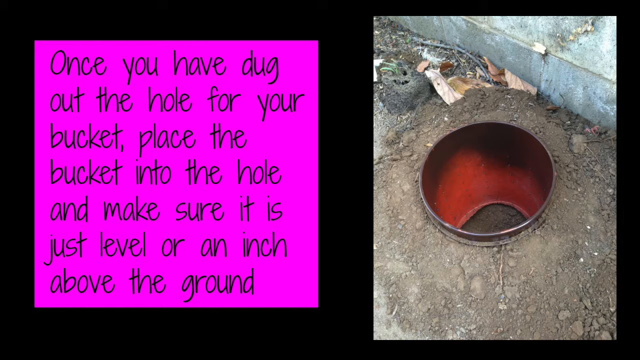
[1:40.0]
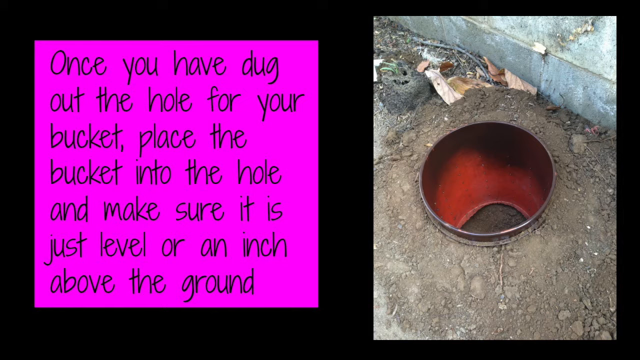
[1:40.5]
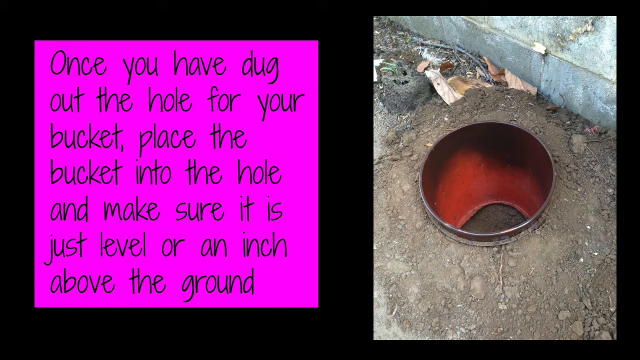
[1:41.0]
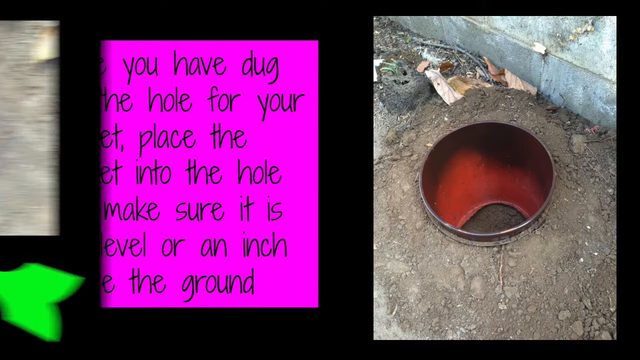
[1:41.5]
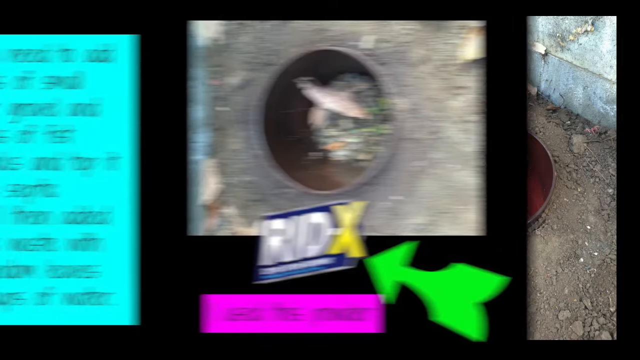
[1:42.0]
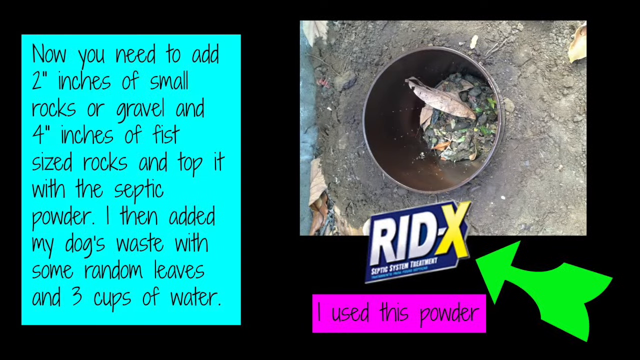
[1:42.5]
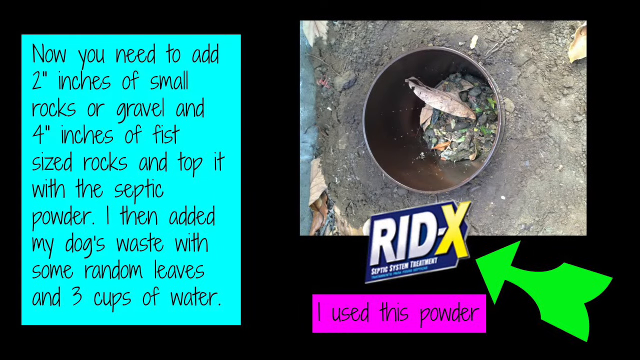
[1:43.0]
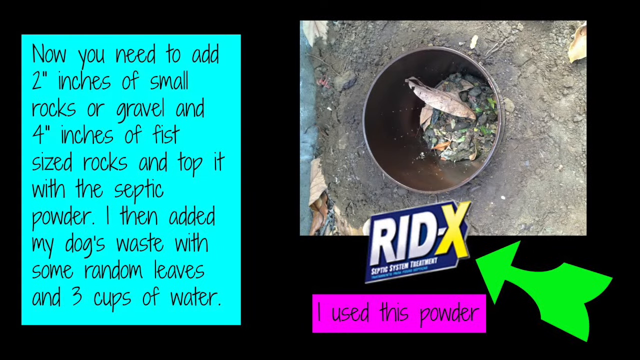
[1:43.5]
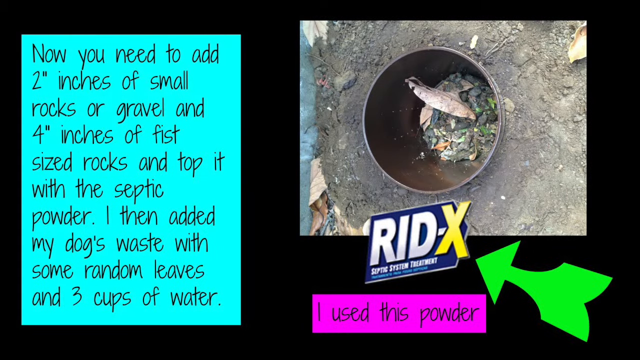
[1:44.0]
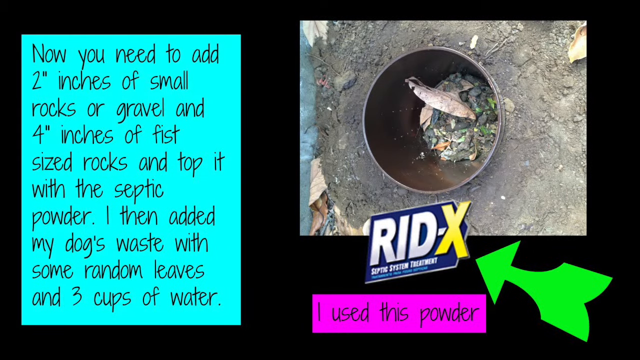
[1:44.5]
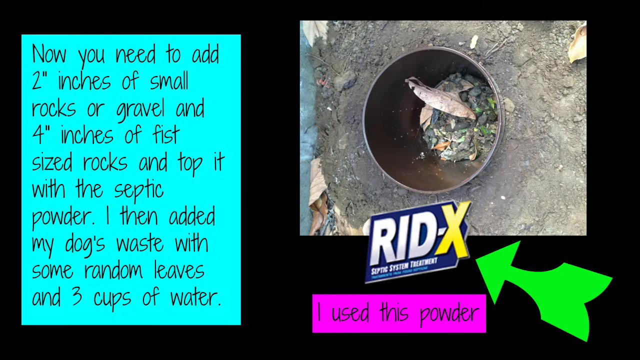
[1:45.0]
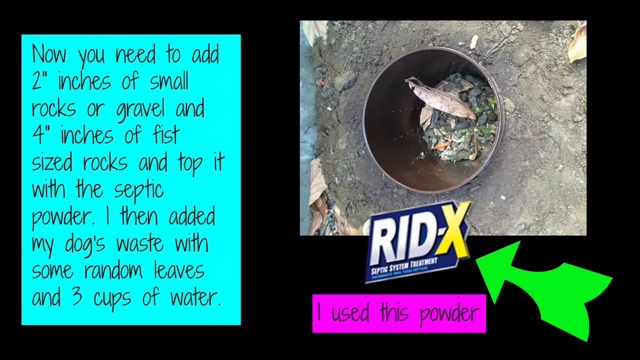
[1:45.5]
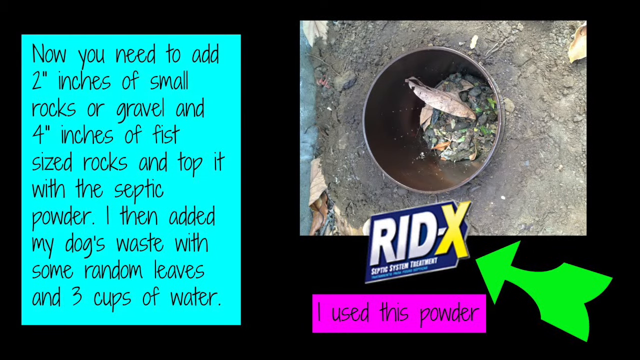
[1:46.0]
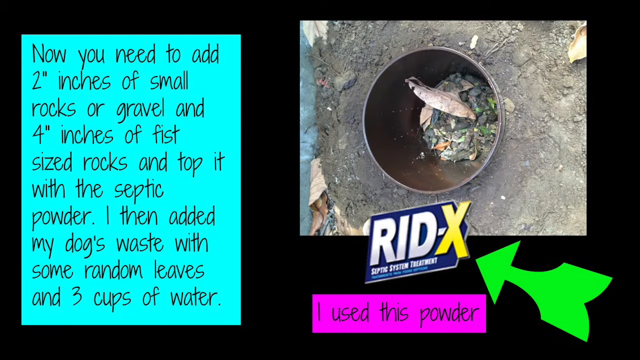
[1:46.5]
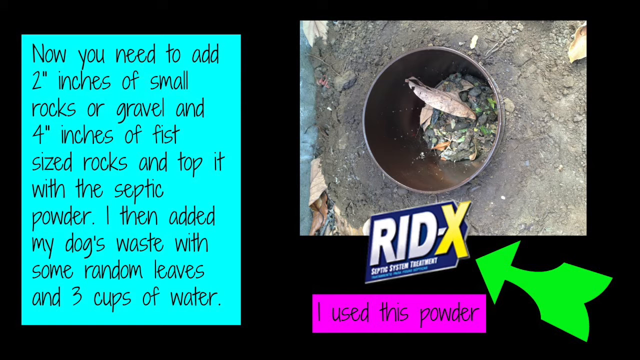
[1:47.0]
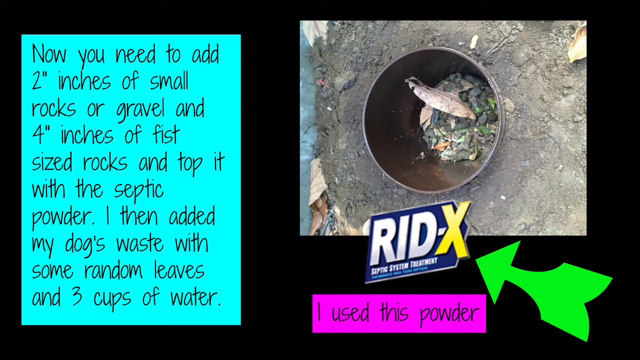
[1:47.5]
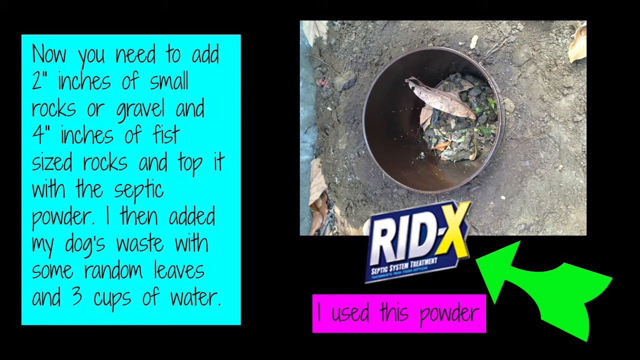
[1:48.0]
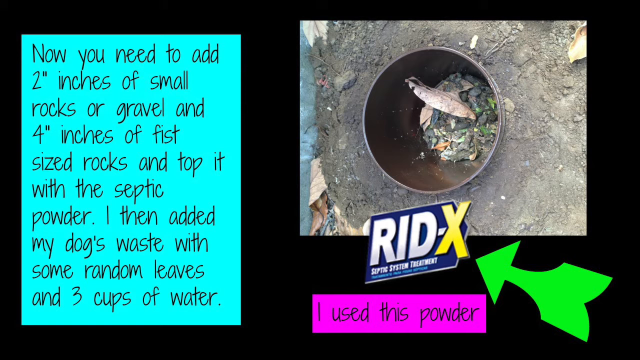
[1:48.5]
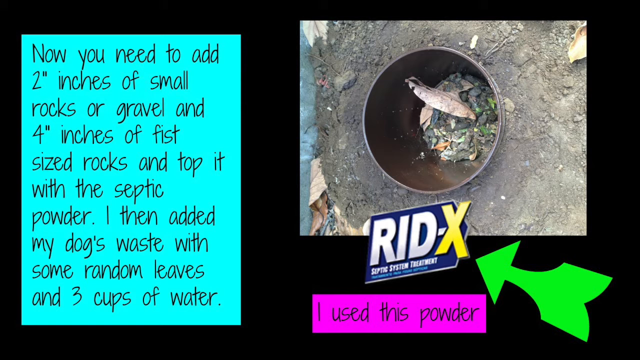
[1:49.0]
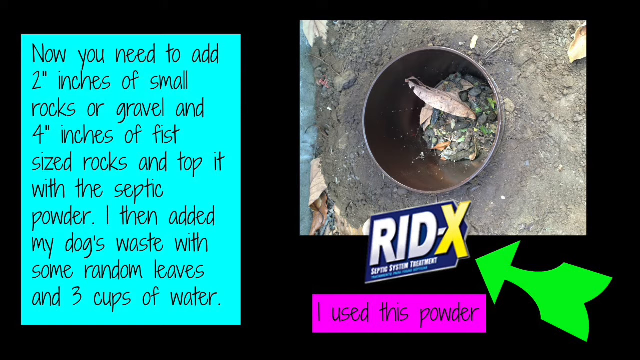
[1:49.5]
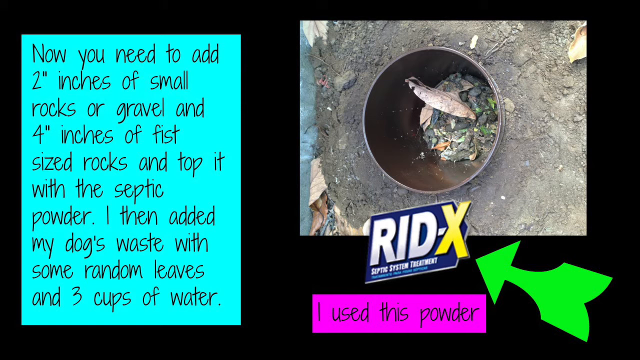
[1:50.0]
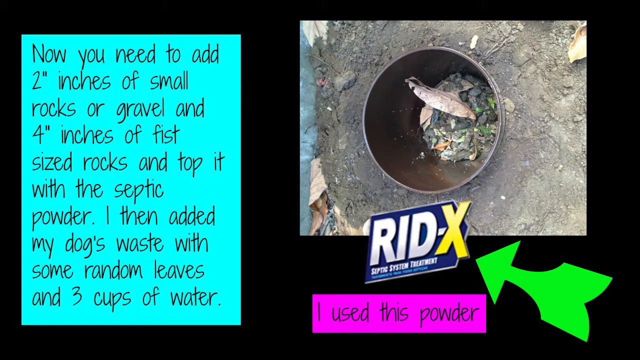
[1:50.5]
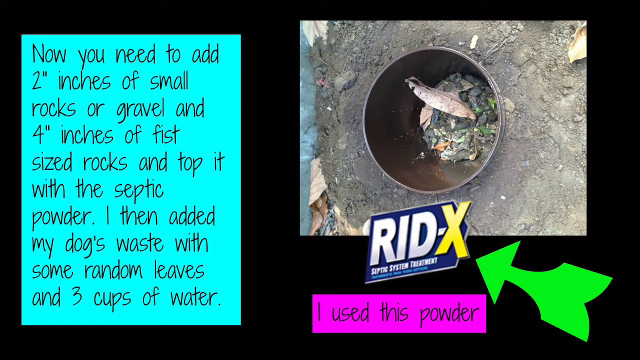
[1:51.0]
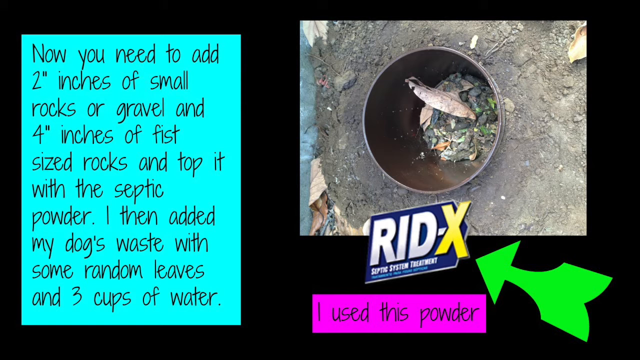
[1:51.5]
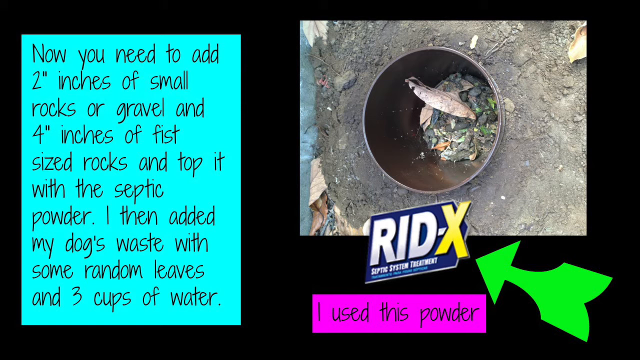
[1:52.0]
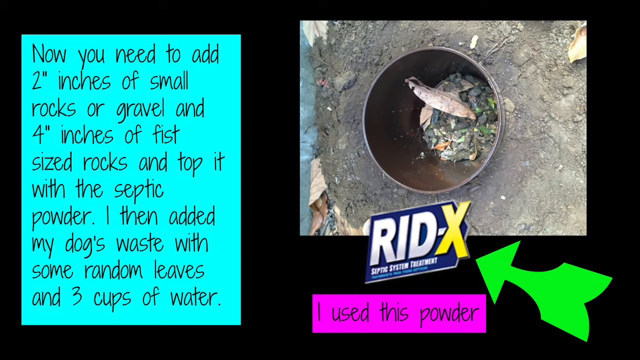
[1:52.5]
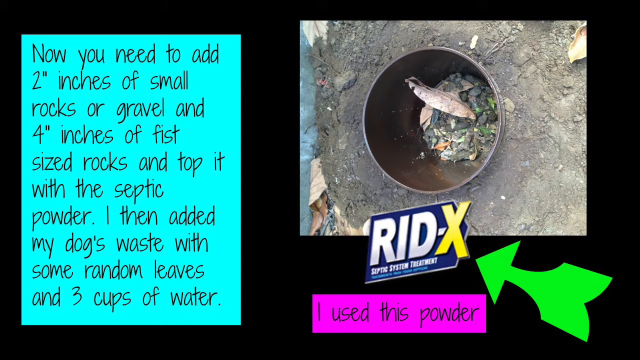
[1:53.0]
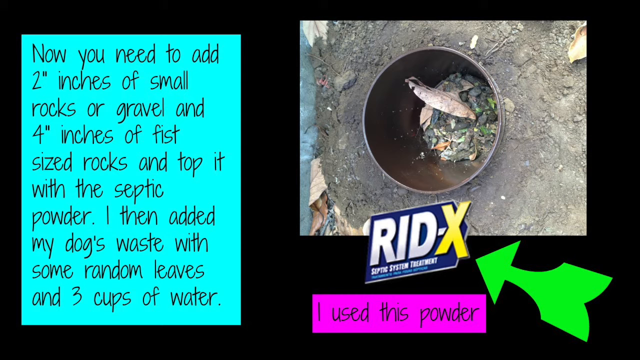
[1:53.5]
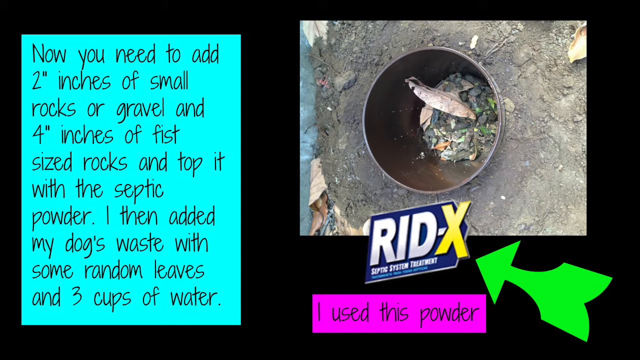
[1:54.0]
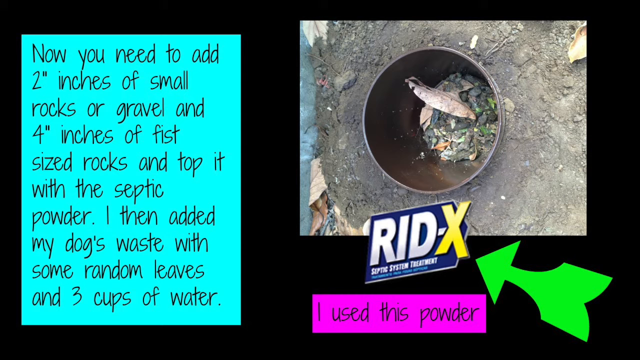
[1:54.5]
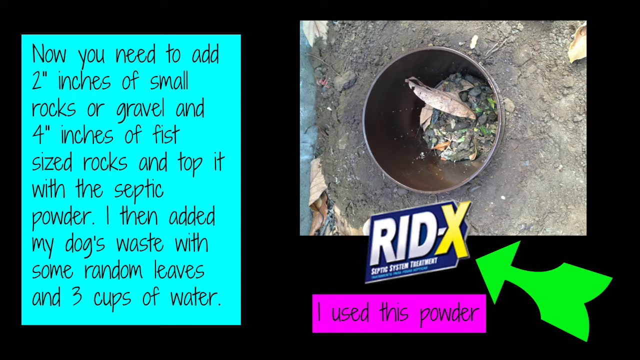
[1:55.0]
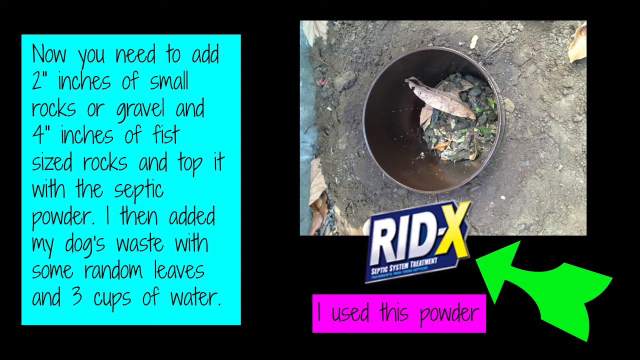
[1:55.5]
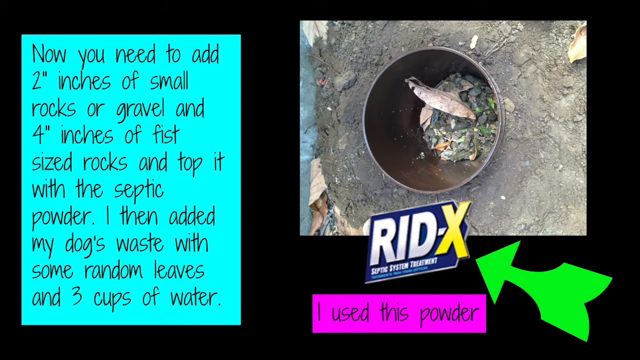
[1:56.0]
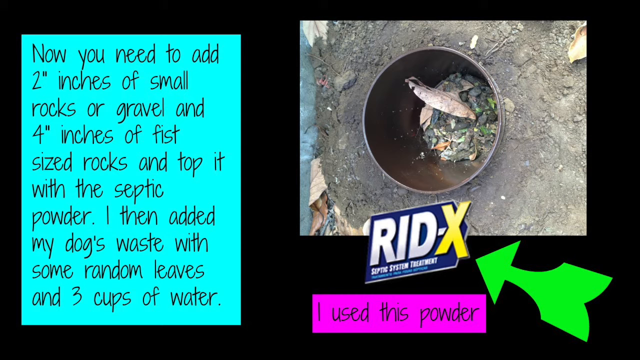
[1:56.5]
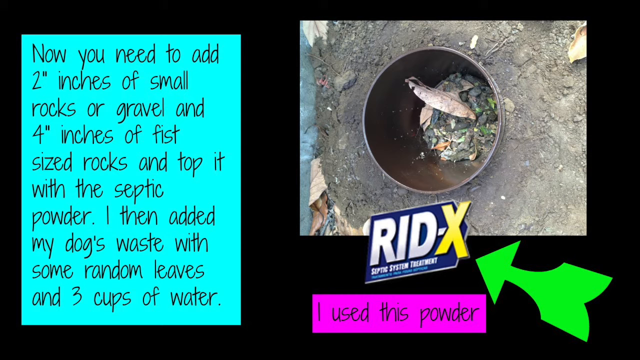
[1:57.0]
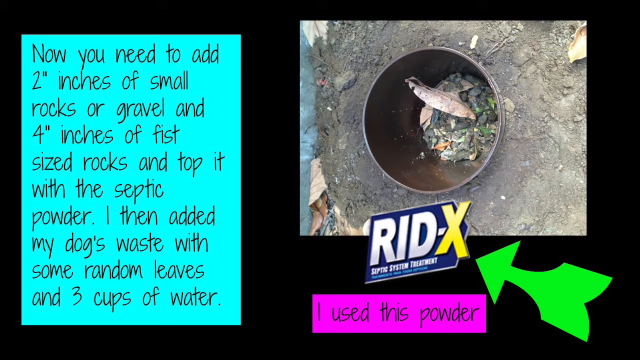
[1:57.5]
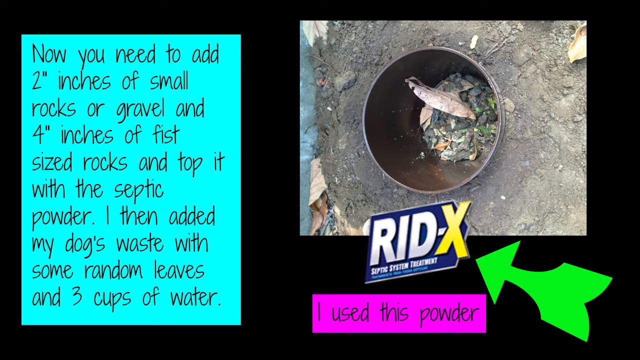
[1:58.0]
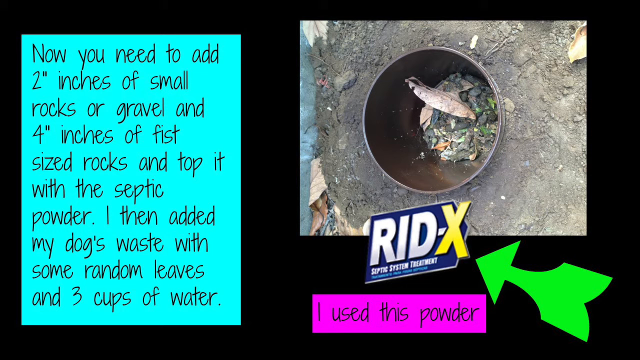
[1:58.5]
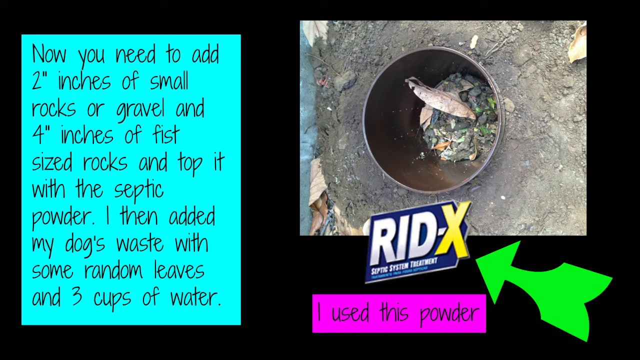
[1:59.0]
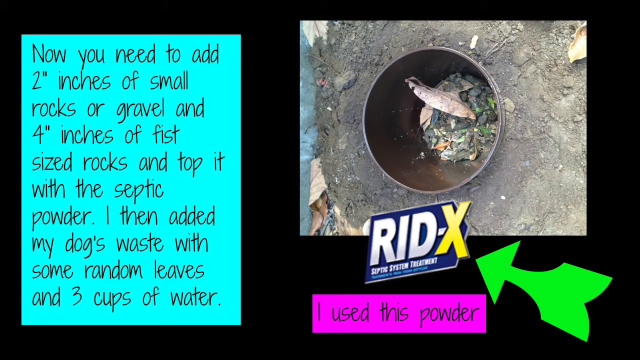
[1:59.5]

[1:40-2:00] A wipe from the left to the right side of the screen reveals a new slide with two pieces of information. A text block in black on a blue background takes up the left-hand side and reads "Now you need to add 2 inches of small rocks or gravel and 4 inches of fist sized rocks and top it with the septic powder. I then added my dog's waste with some random leaves and 3 cups of water." In the top right is a photo of the bucket with some waste and some leaves inside it. At the bottom is a logo reading "RID-X," with "RID" in white and "X" in yellow, and "Septic System Treatment" written beneath it. A large green arrow points toward the logo, and underneath it, text on a pink background reads "I used this powder."